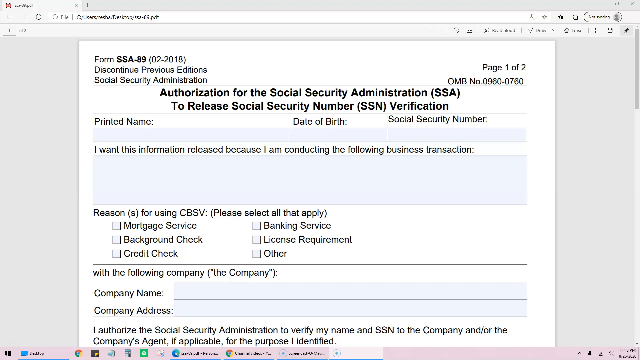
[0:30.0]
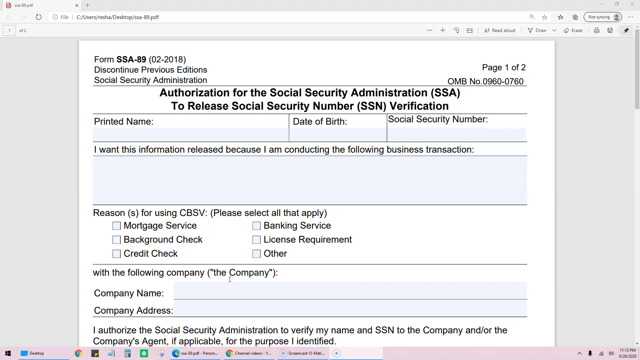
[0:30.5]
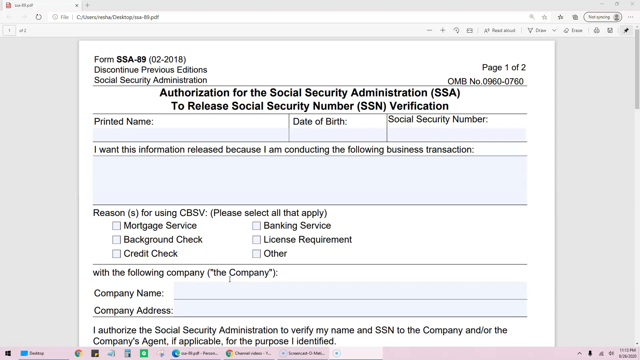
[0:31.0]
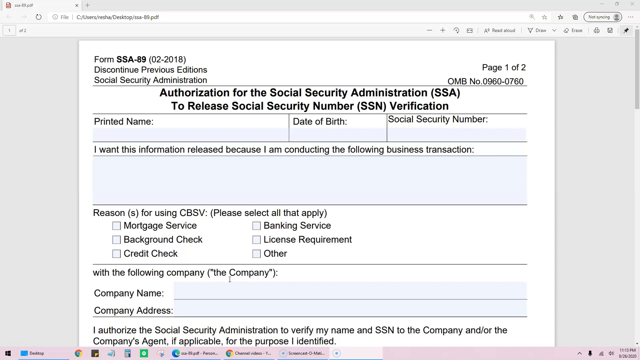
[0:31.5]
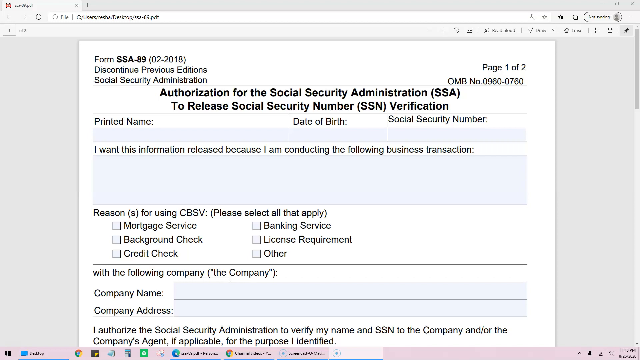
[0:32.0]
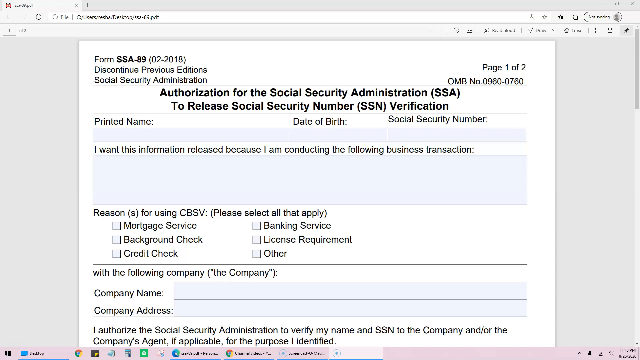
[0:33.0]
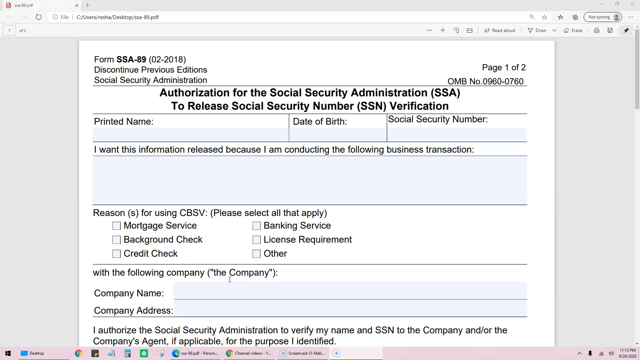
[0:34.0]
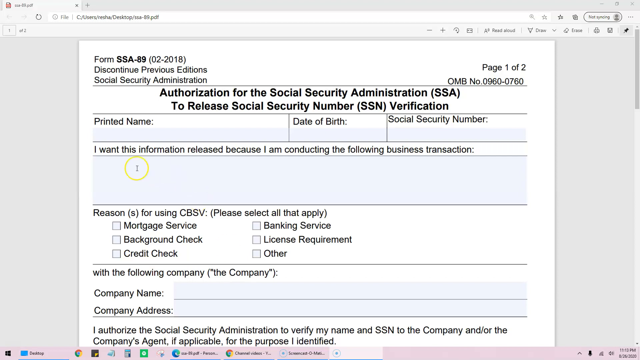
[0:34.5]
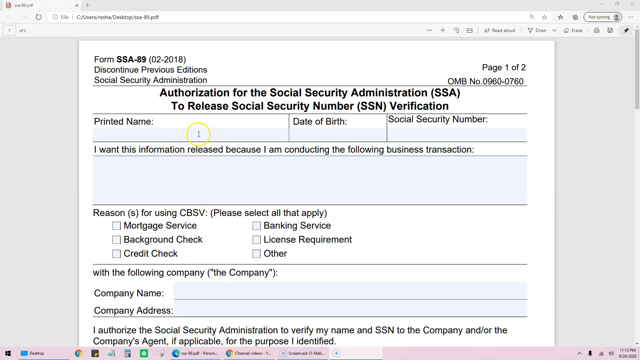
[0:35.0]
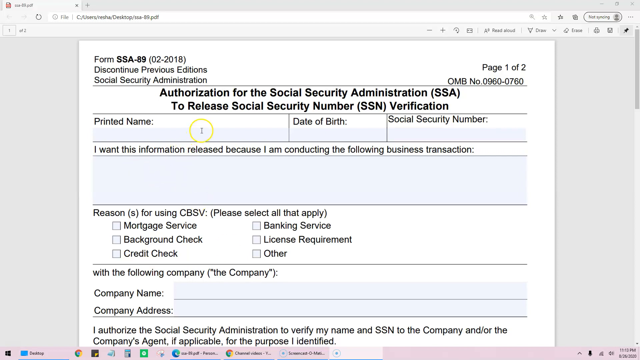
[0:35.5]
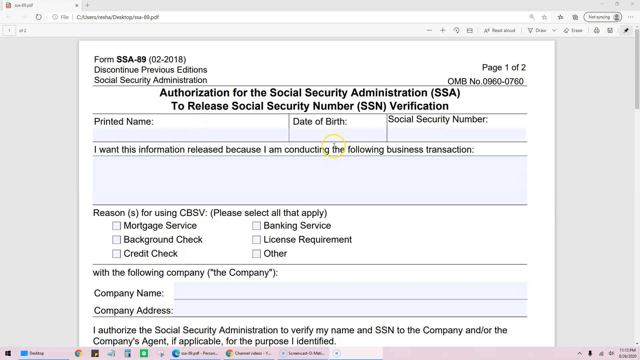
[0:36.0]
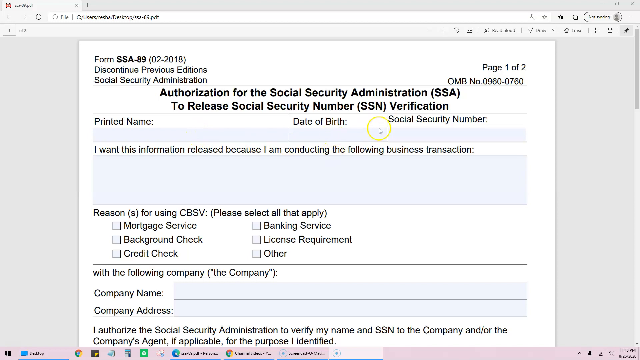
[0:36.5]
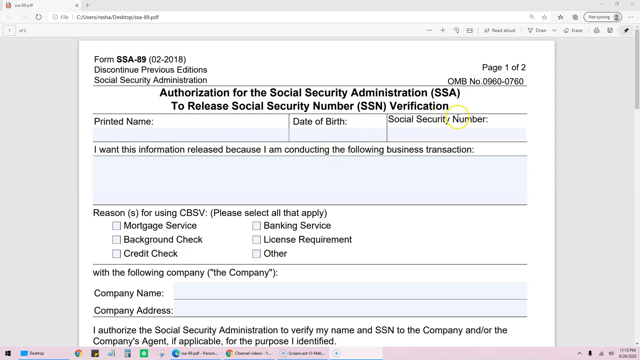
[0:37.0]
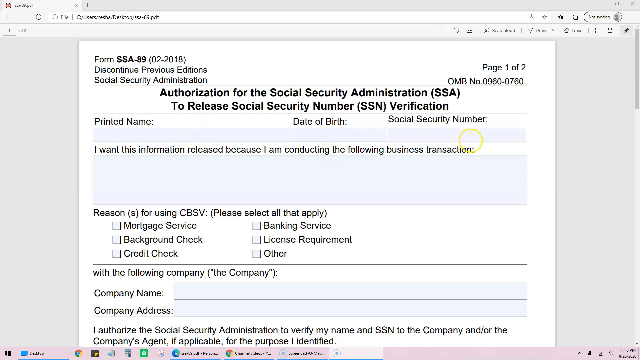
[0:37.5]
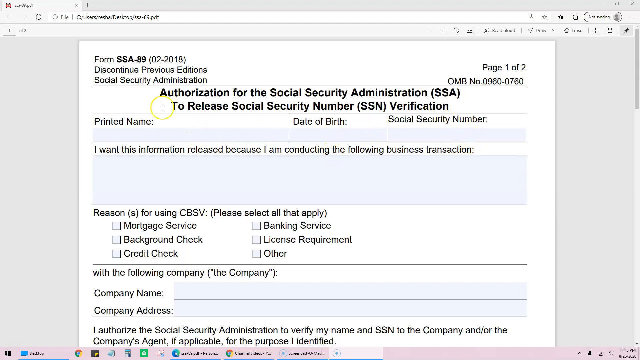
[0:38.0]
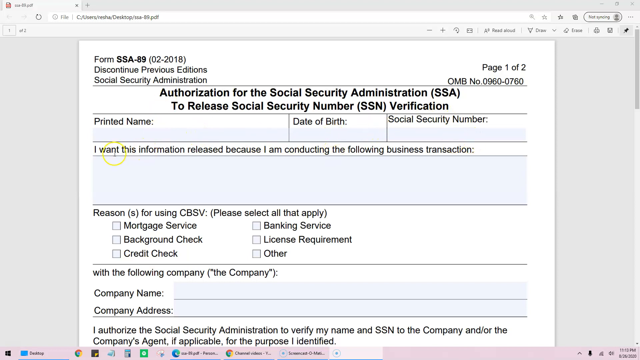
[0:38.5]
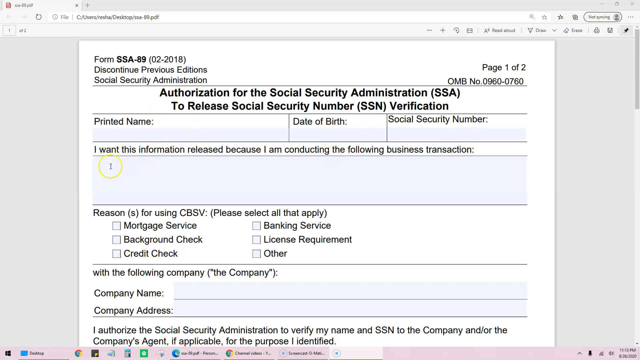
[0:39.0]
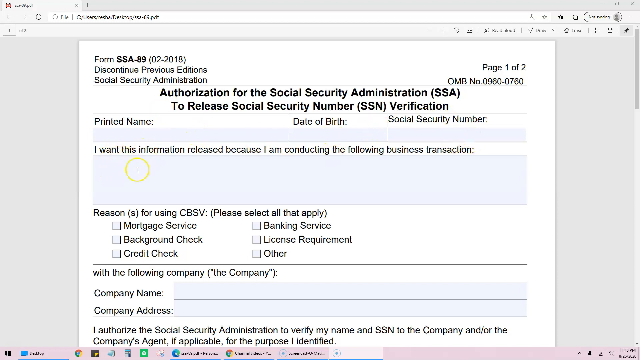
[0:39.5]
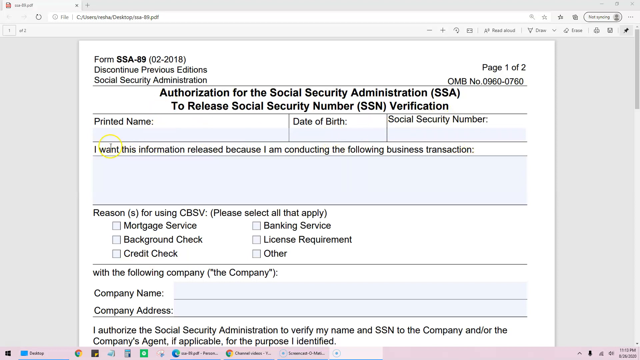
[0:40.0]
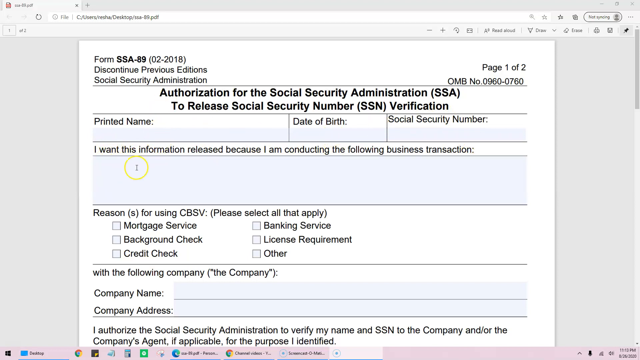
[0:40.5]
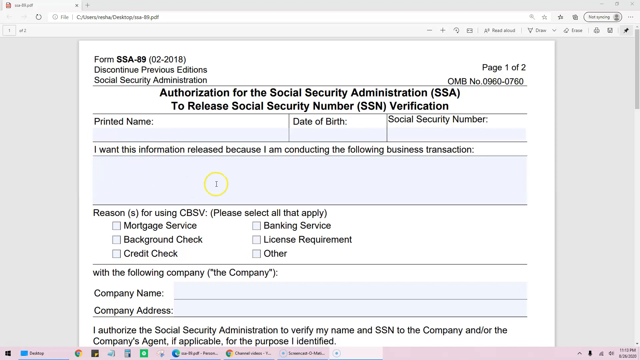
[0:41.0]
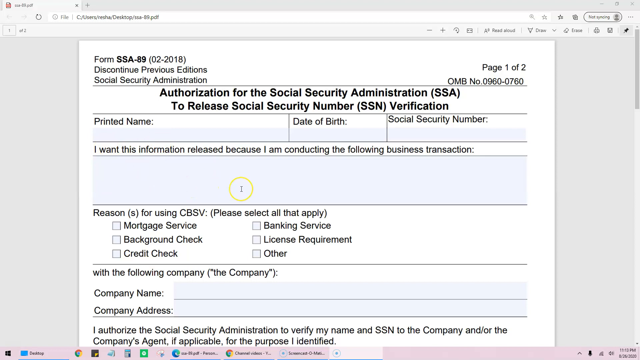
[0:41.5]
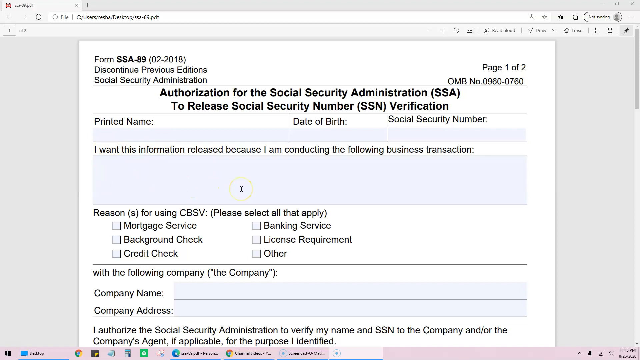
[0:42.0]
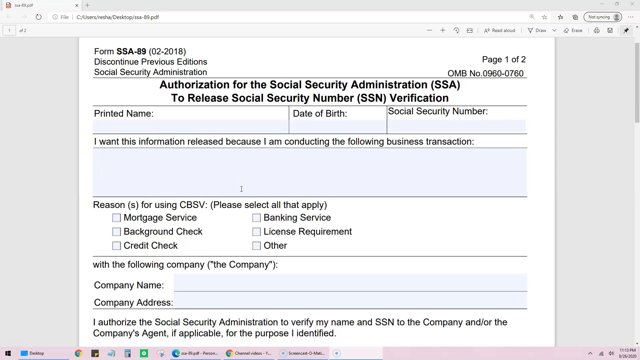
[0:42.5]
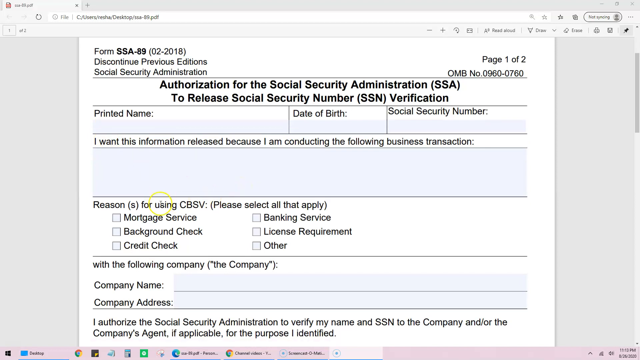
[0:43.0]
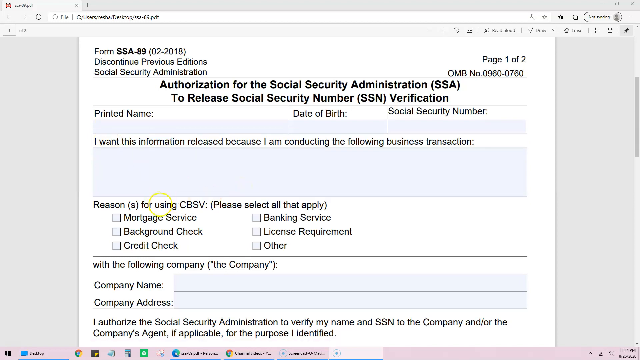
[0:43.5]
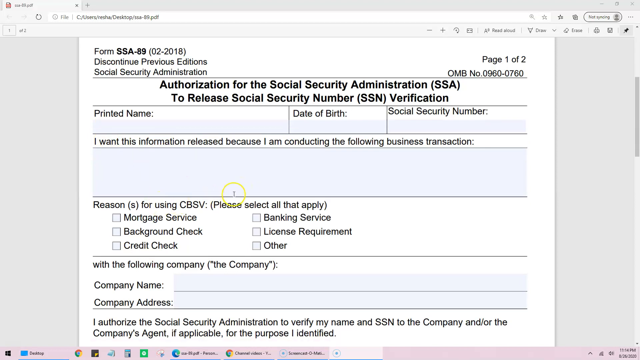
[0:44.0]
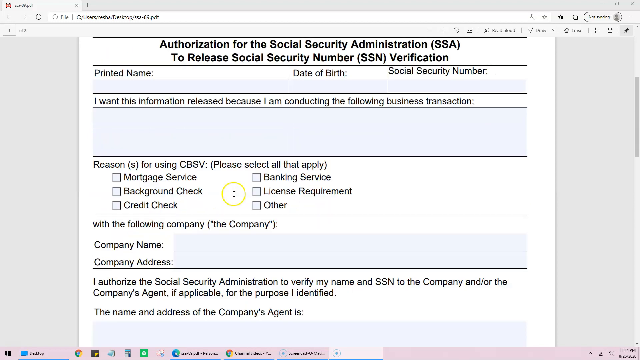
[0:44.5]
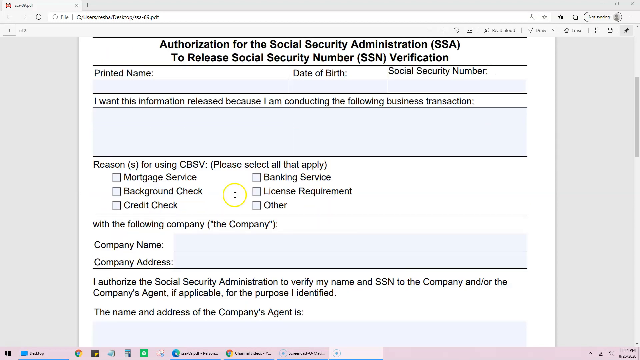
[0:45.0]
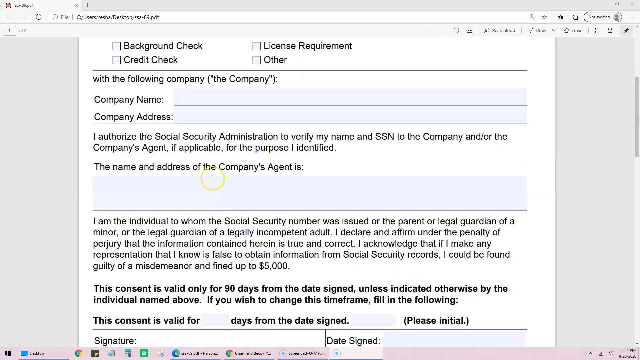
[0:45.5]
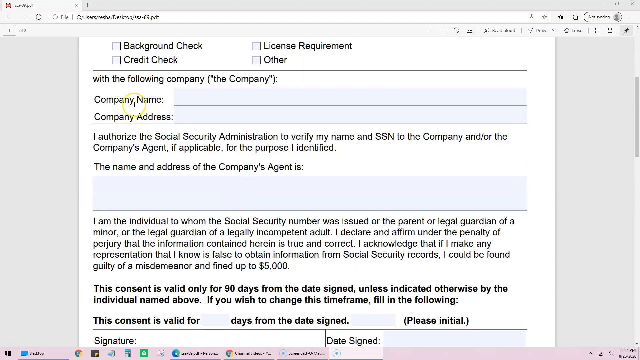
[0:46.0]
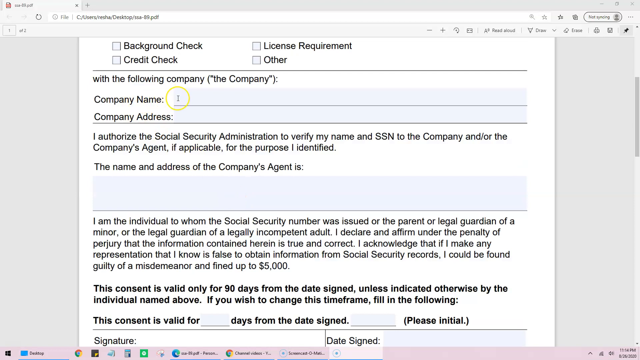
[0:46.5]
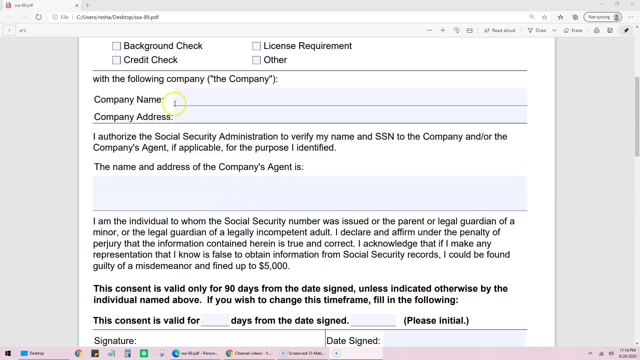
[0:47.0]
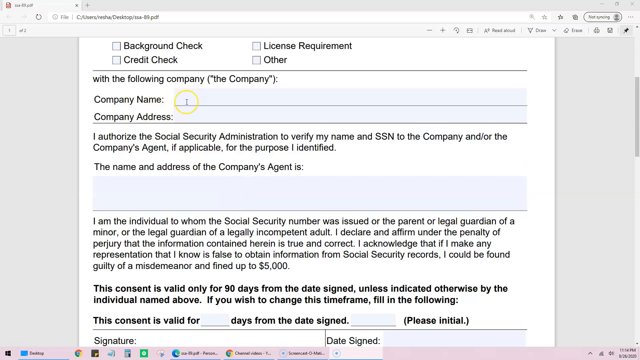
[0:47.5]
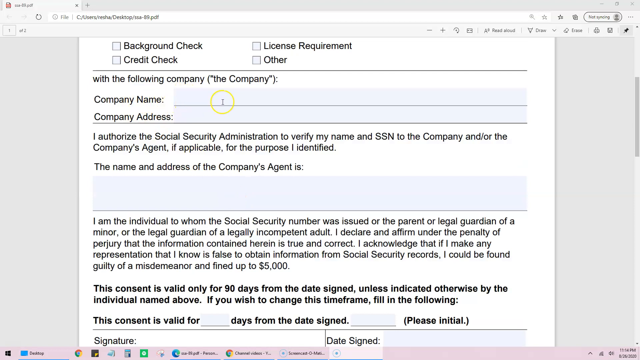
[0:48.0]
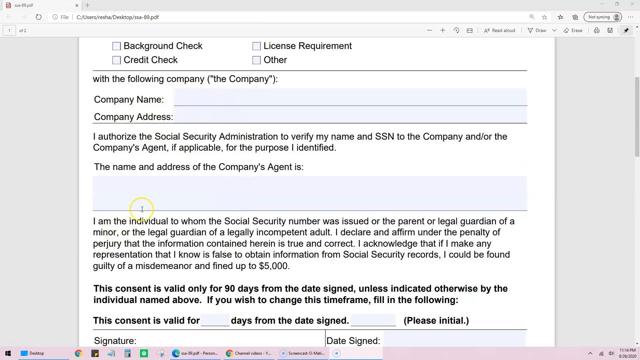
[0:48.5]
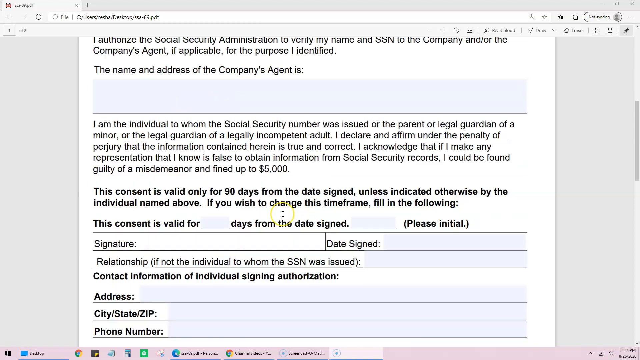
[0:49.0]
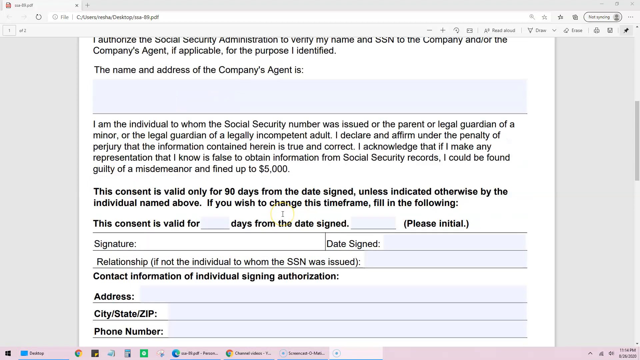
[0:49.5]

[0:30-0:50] Form SSA-89, an authorization for the Social Security Administration to release social security number verification, is on screen. Beneath the title are the fields to be filled out, including printed name, date of birth, and social security number. Someone moves a mouse pointer, which has a yellow circle around it for high visibility, around the page, pointing to the different areas to be filled out: the printed name, date of birth, social security number, and other information farther down the form, including the company name and address. The pointer also indicates the area under the name and address of the company's agent, a free-form field where the company information can be entered manually. It looks like a standard form, sort of like a legal document, allowing the release of social security information for the person using it.